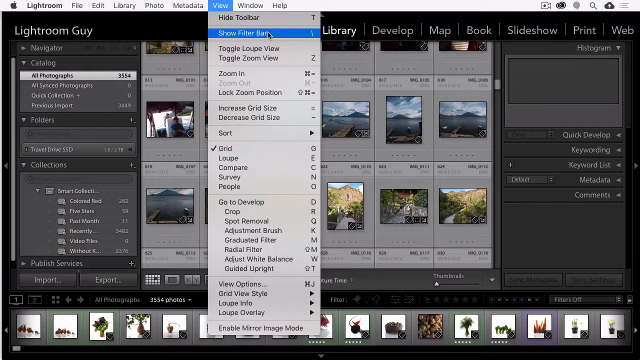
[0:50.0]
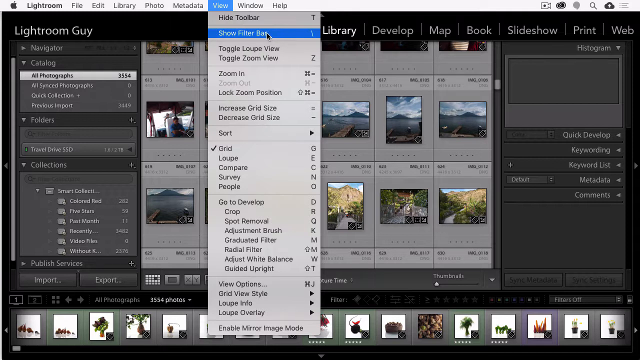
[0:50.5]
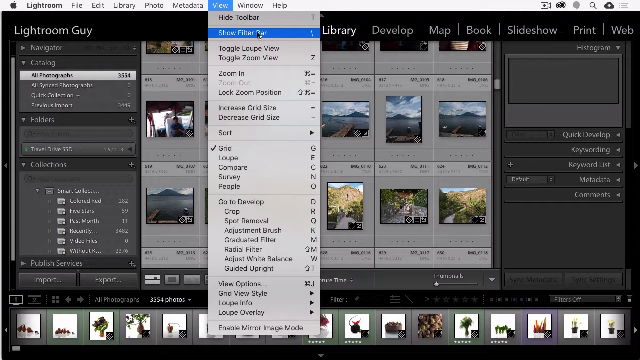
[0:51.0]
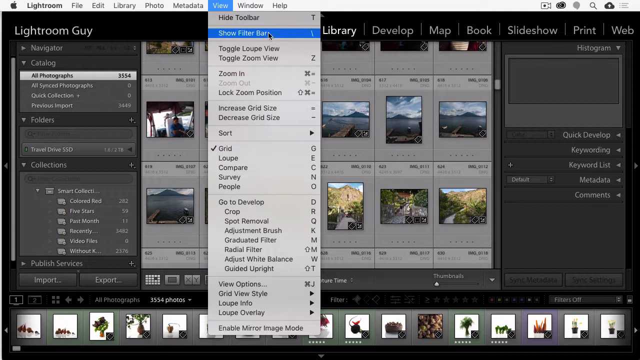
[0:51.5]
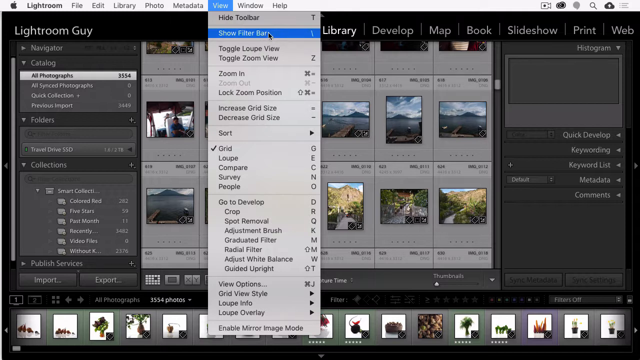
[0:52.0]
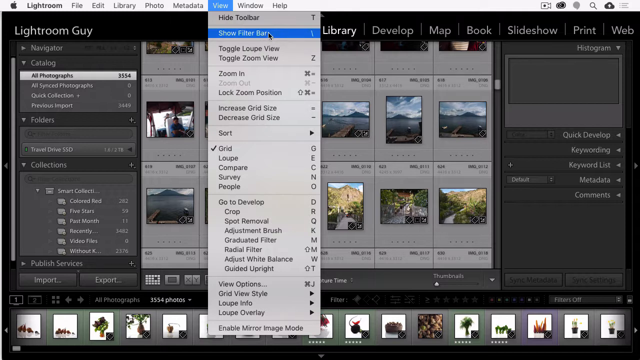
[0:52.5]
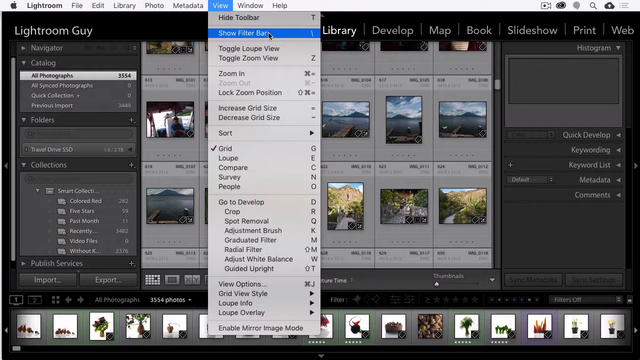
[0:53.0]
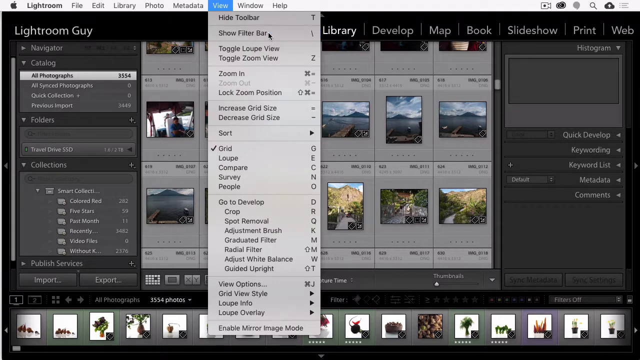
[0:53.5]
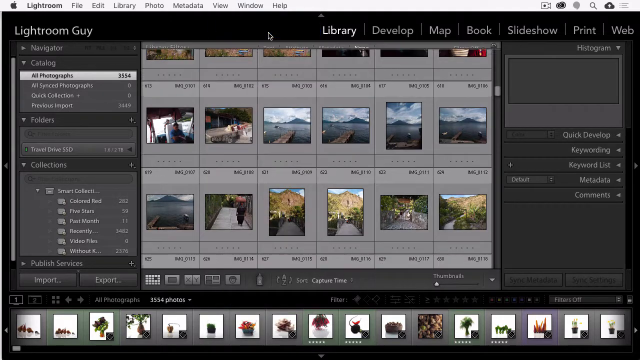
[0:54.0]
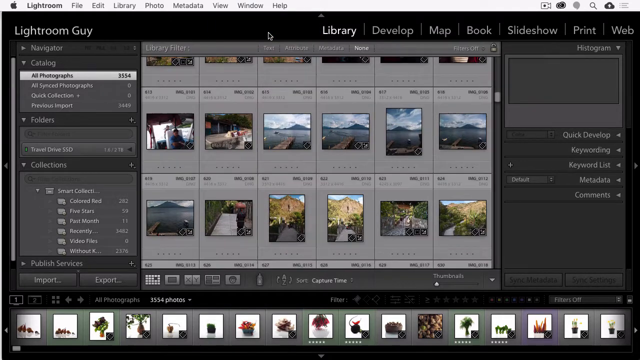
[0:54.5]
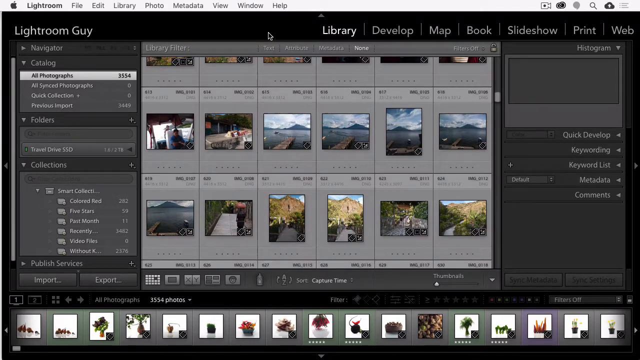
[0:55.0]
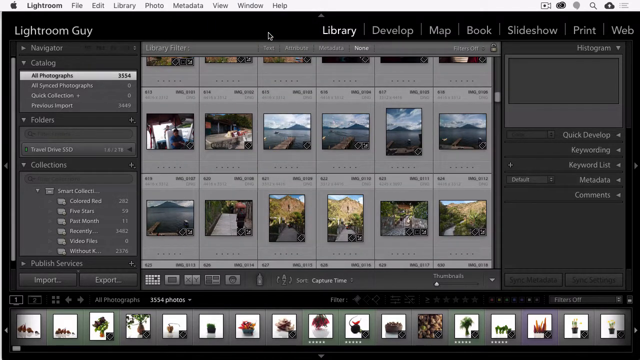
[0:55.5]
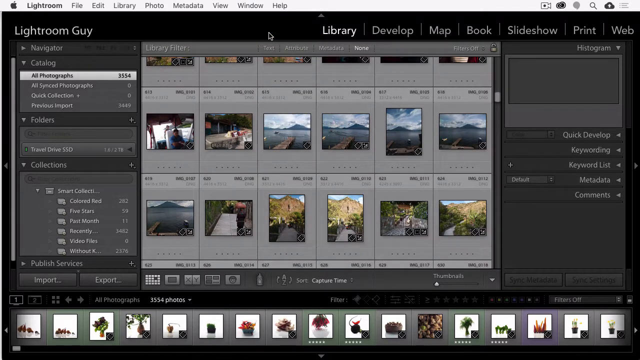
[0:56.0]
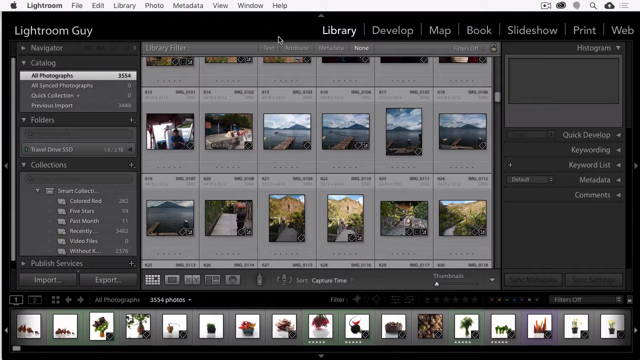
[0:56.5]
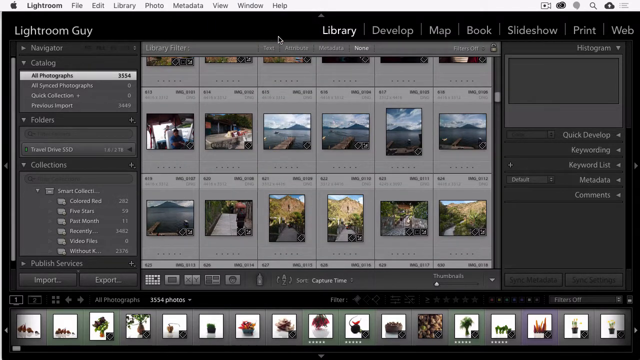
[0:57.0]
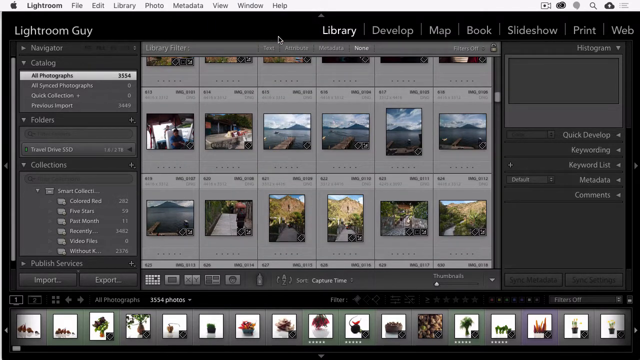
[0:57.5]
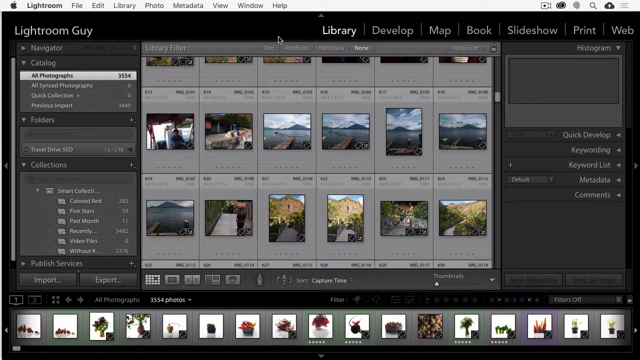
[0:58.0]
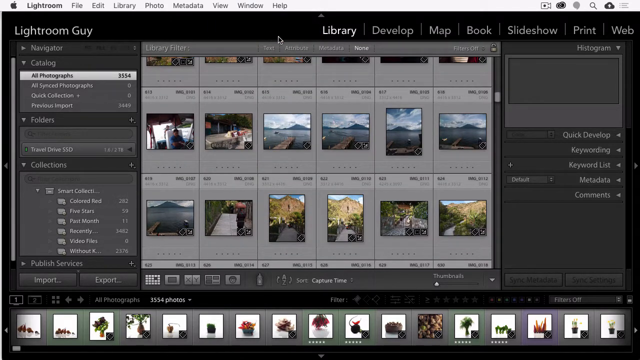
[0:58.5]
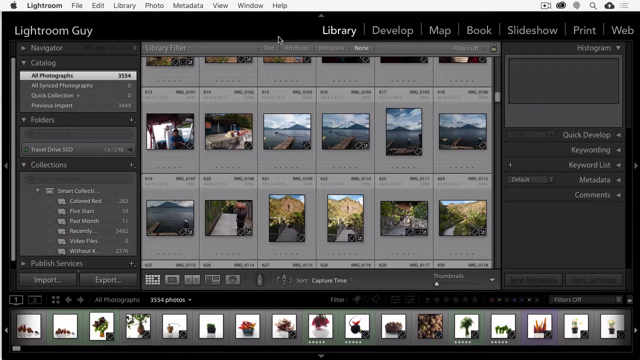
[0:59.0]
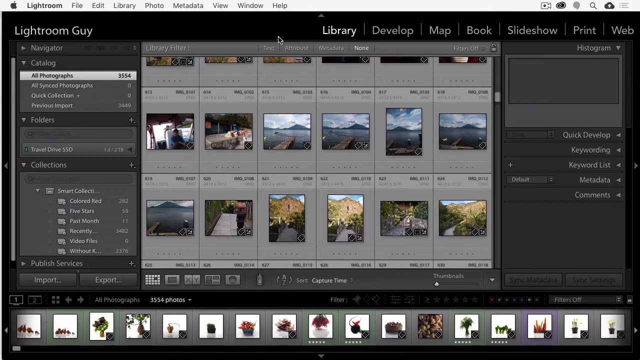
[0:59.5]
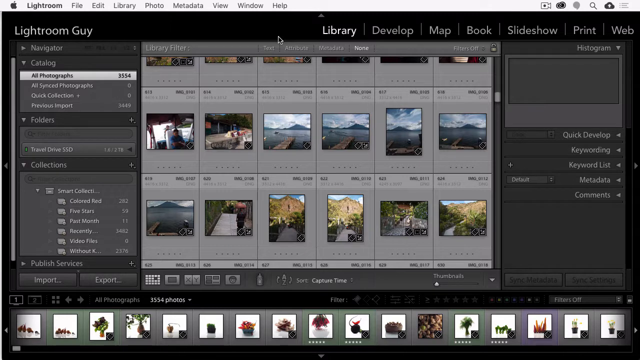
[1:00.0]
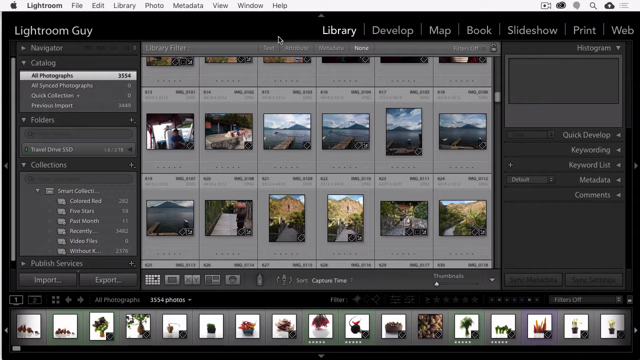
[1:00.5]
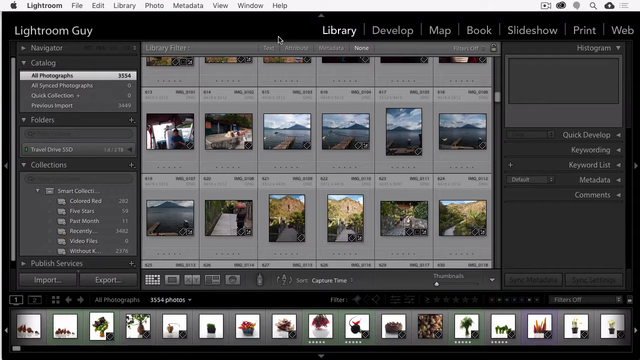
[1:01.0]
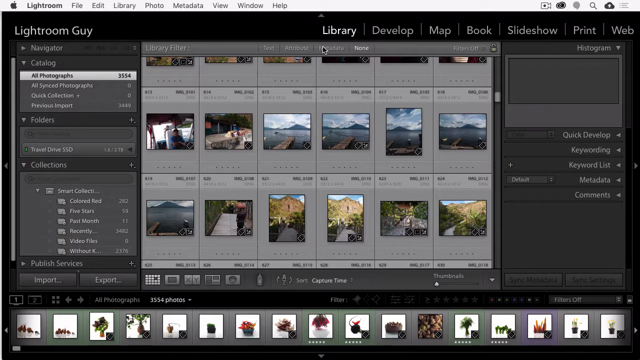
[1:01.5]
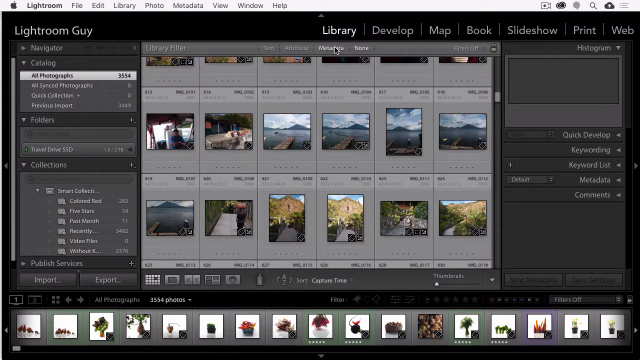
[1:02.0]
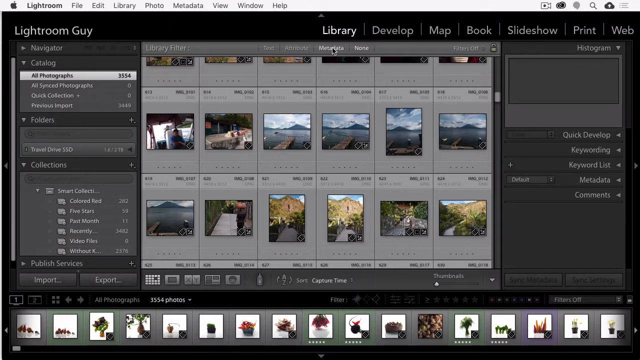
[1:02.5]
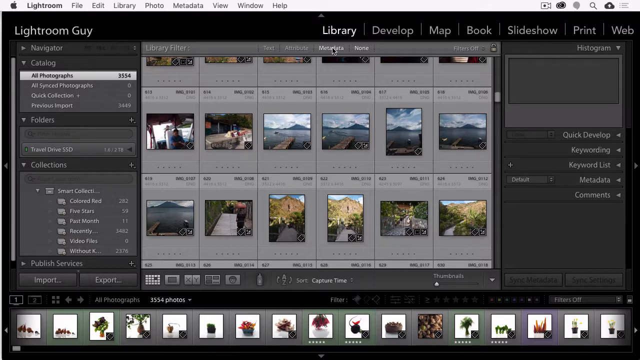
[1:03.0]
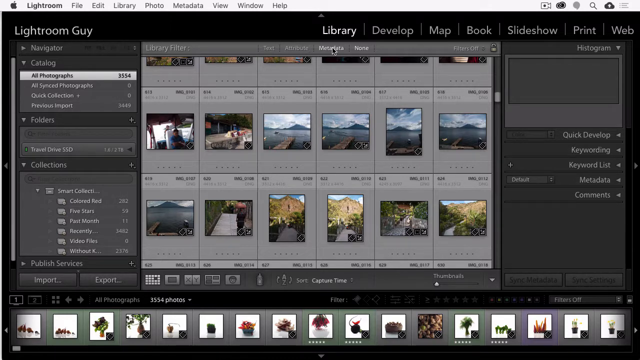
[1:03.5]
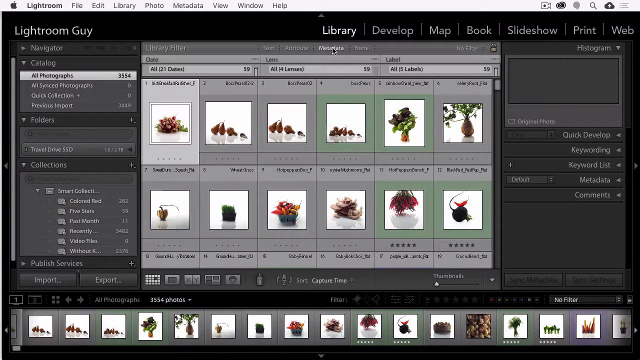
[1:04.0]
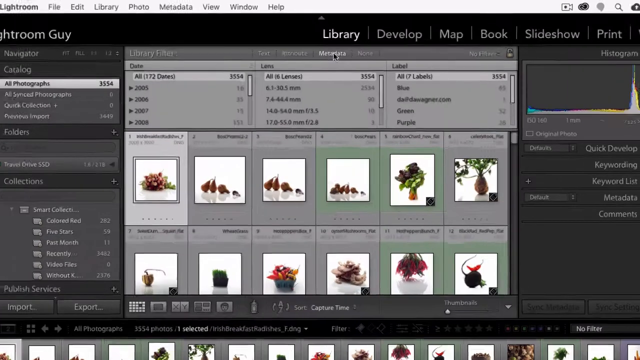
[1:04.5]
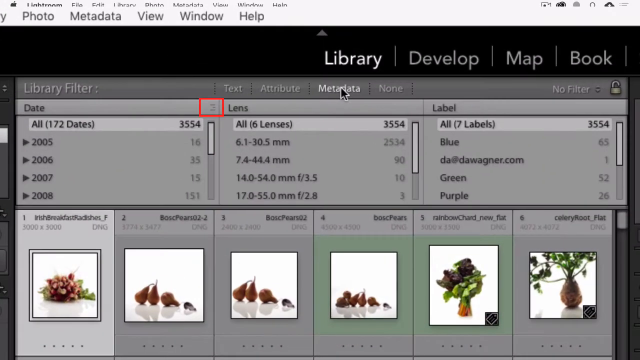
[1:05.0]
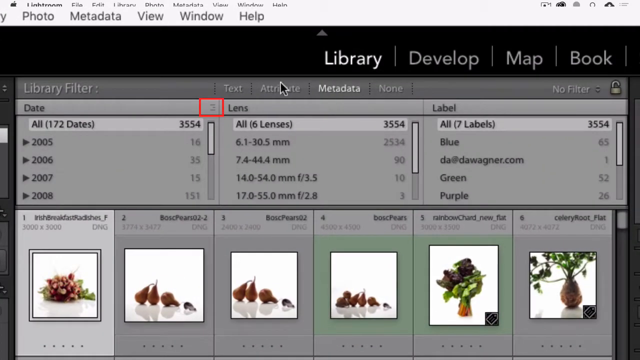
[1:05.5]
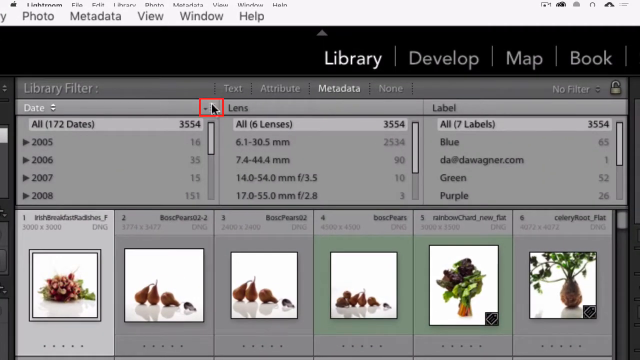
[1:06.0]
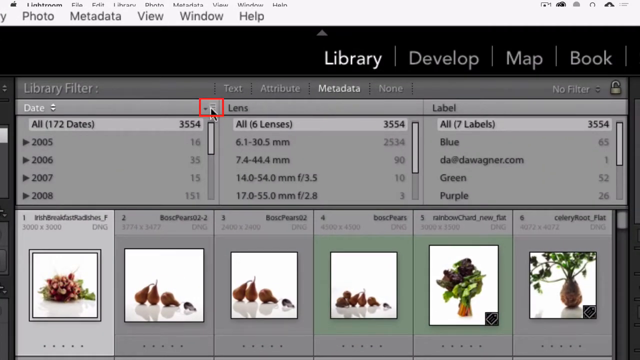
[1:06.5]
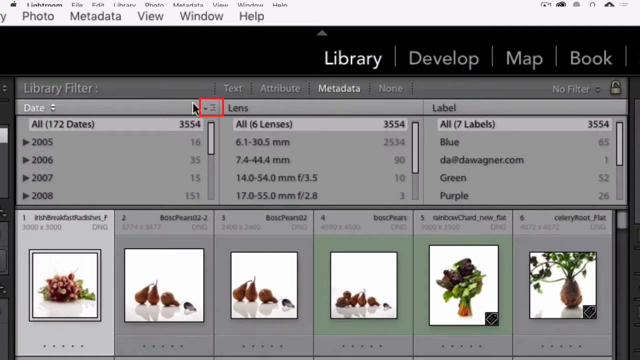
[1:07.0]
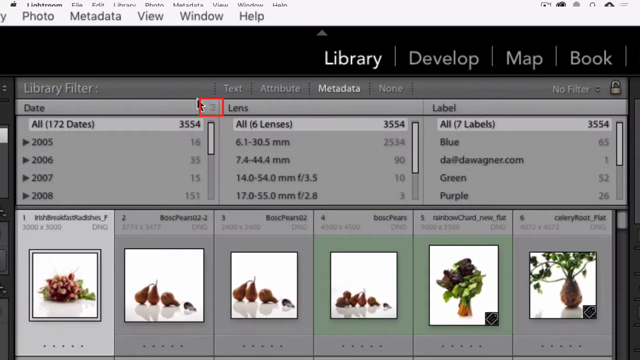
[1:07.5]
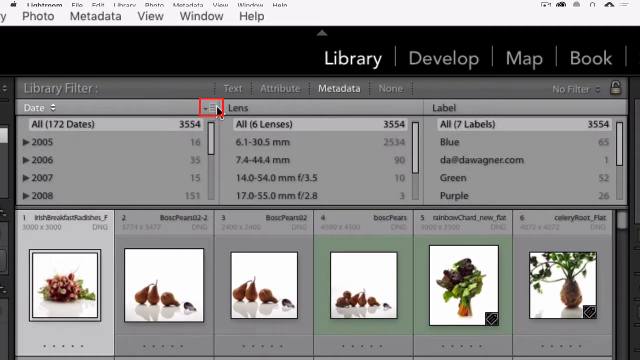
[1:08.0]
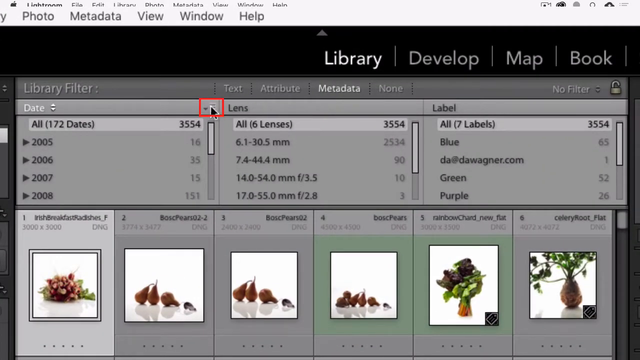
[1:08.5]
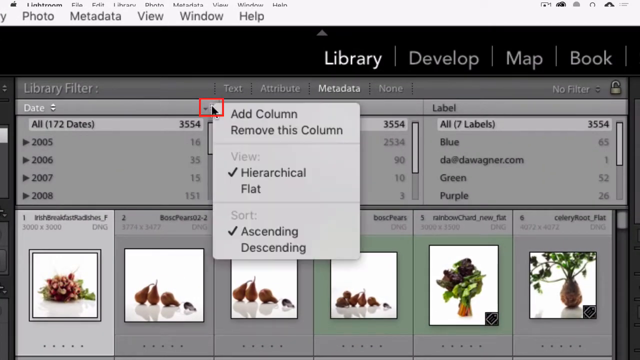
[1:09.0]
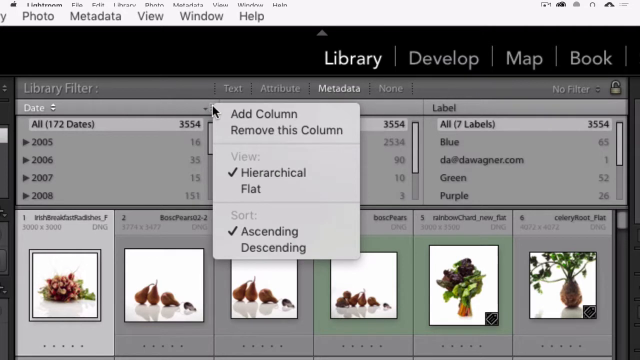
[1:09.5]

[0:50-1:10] After the show filter option is clicked, the view returns to the Lightroom library. The user scrolls up a little, clicks on Metadata, and the screen zooms in. The library filter is shown with columns: a date column with visible dates 2005, 2006, 2007 and 2008, a column grouping different lenses, and a column grouping labels. Pictures of different plants appear at the bottom. On the date column, a red square is shown where the date is.